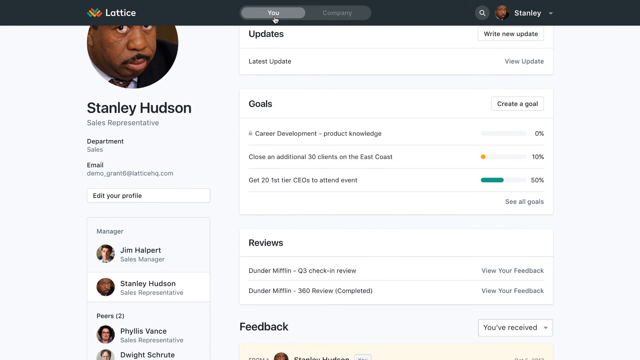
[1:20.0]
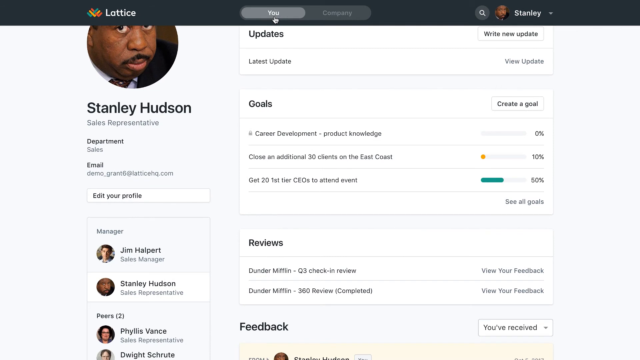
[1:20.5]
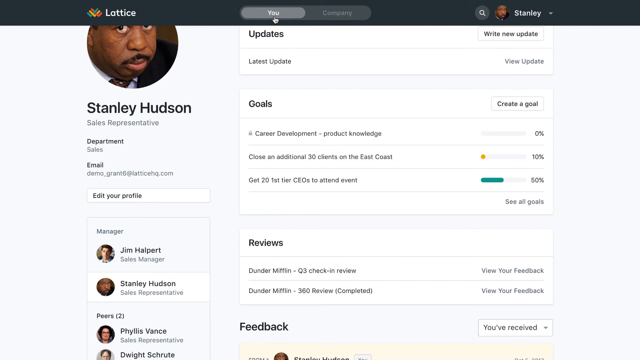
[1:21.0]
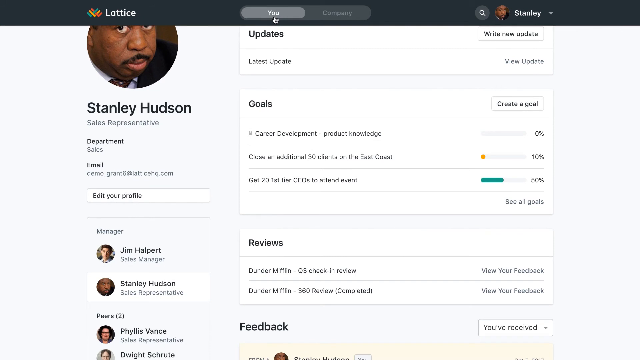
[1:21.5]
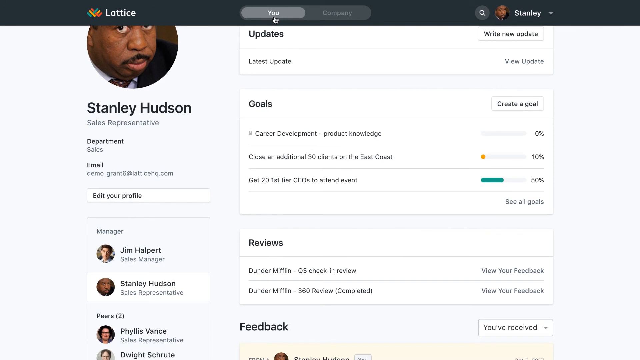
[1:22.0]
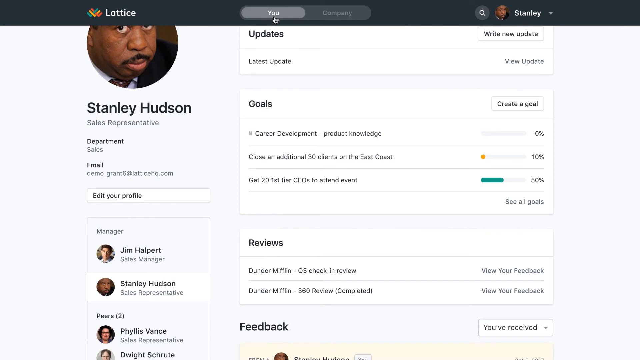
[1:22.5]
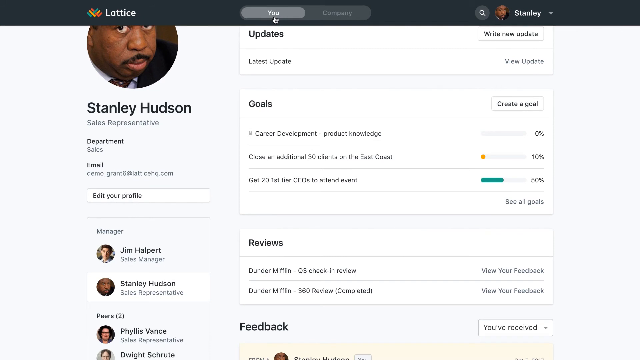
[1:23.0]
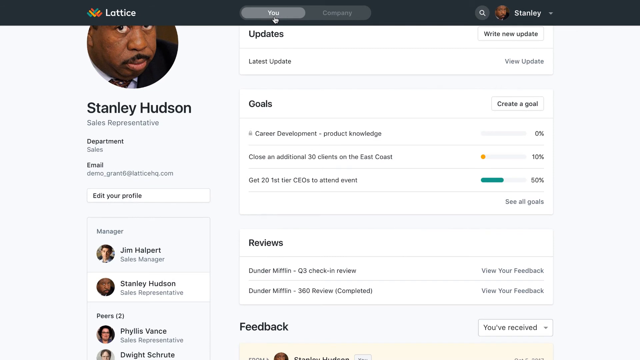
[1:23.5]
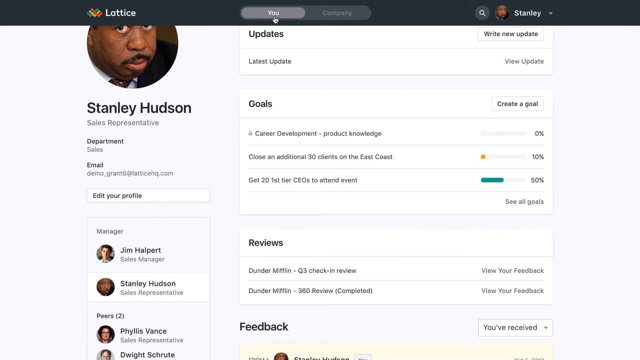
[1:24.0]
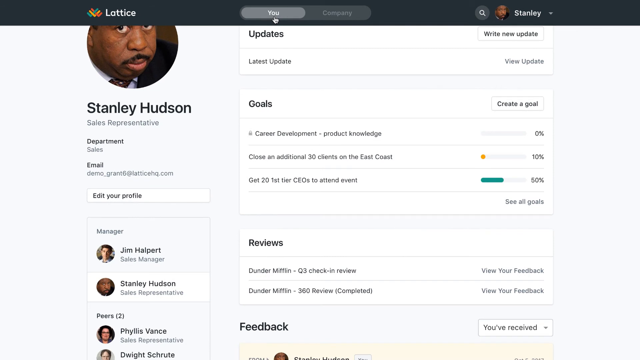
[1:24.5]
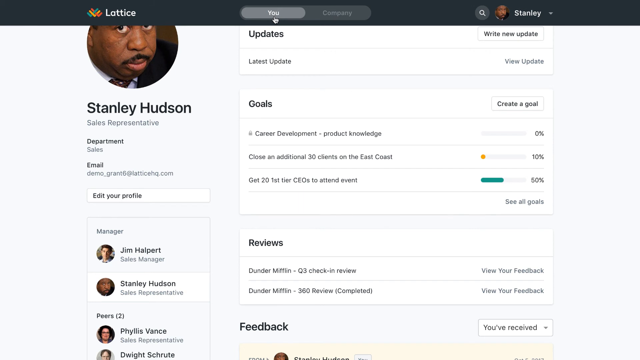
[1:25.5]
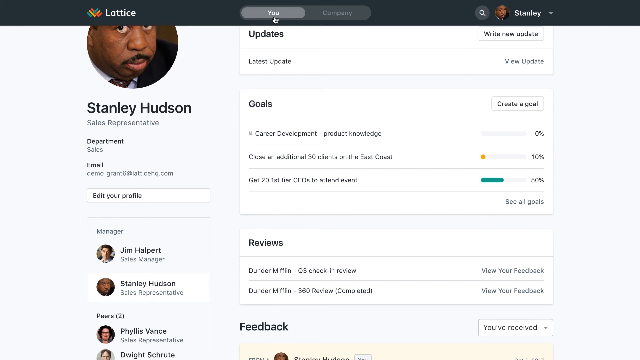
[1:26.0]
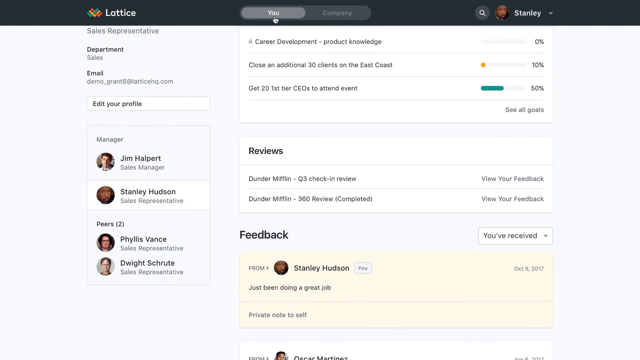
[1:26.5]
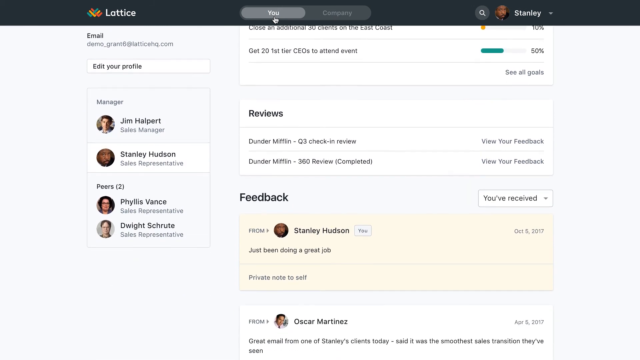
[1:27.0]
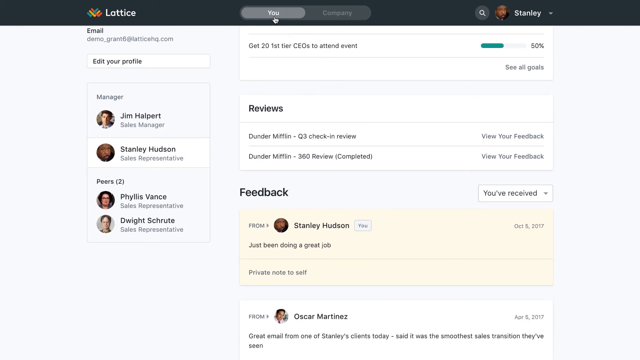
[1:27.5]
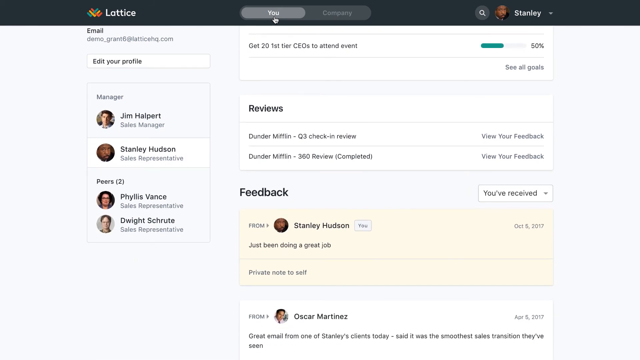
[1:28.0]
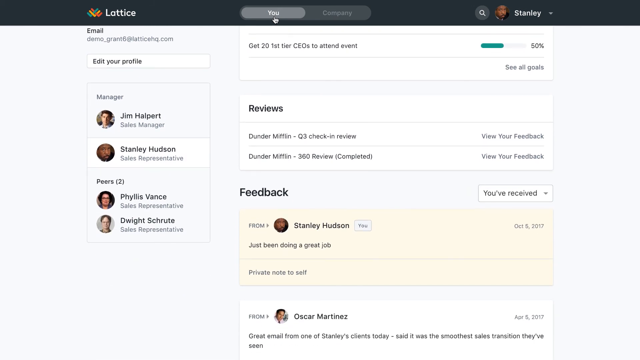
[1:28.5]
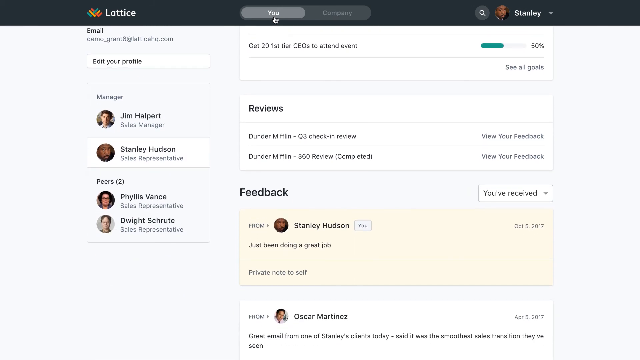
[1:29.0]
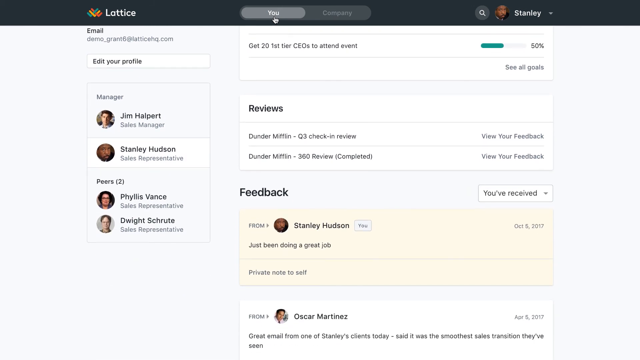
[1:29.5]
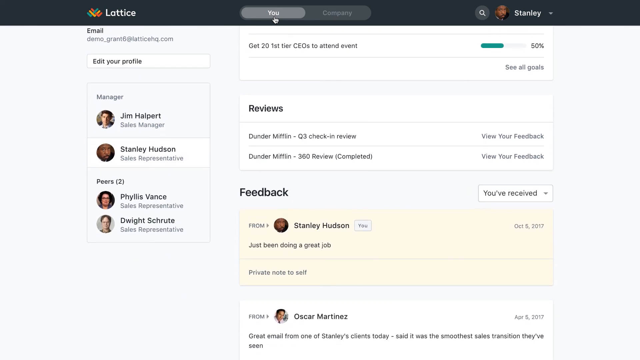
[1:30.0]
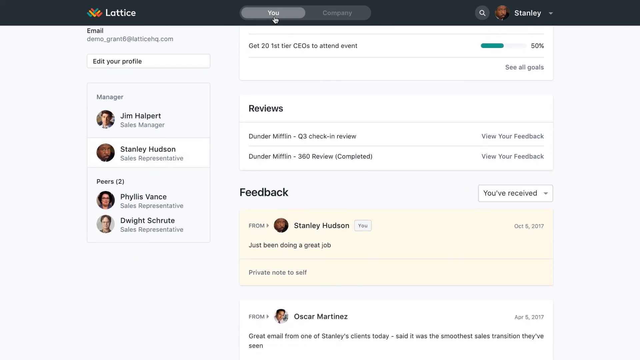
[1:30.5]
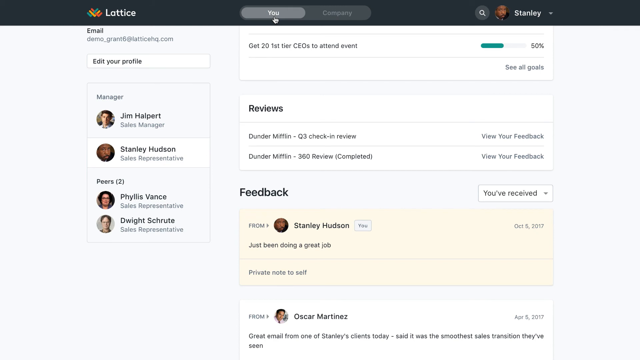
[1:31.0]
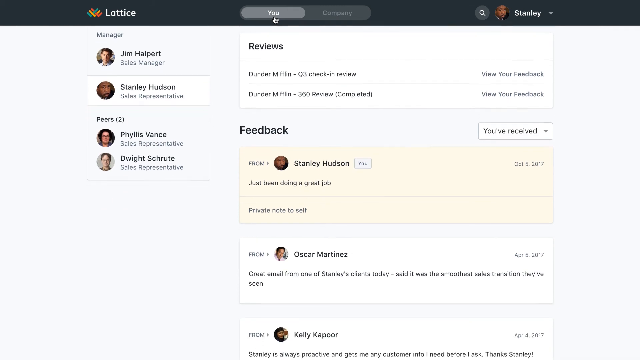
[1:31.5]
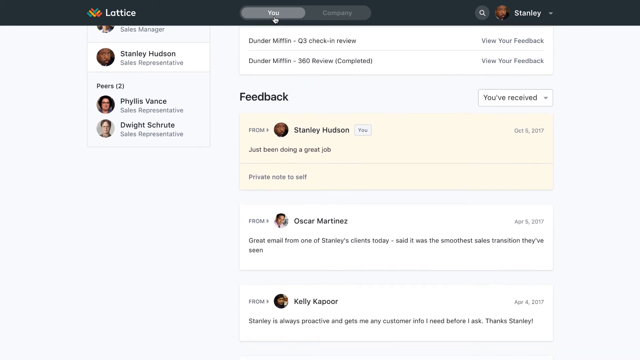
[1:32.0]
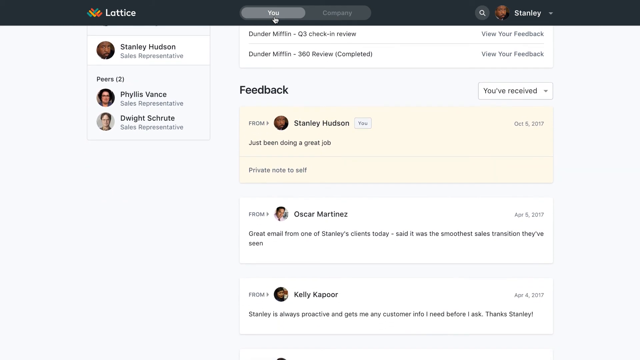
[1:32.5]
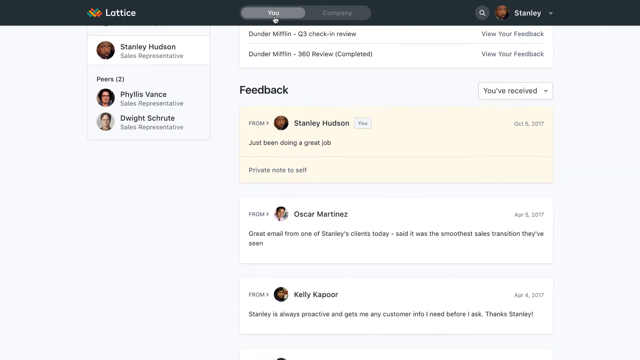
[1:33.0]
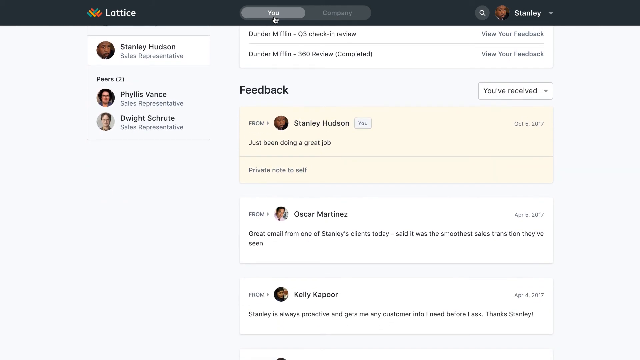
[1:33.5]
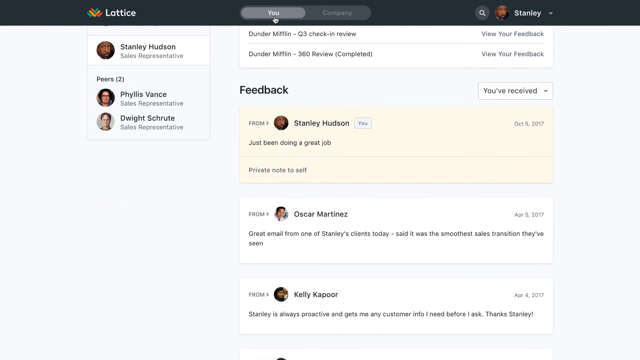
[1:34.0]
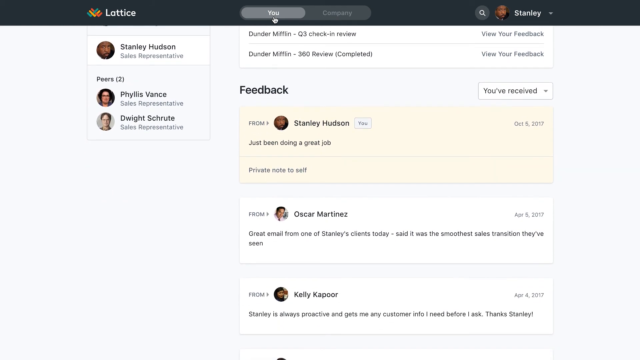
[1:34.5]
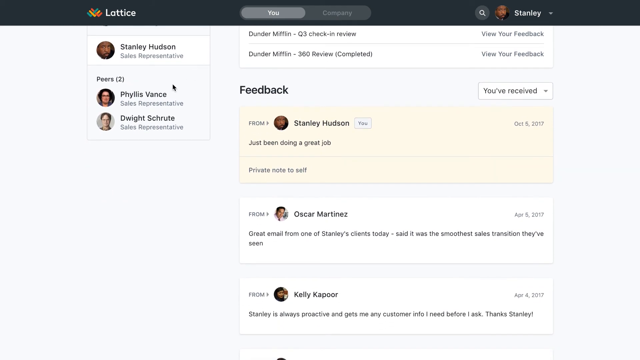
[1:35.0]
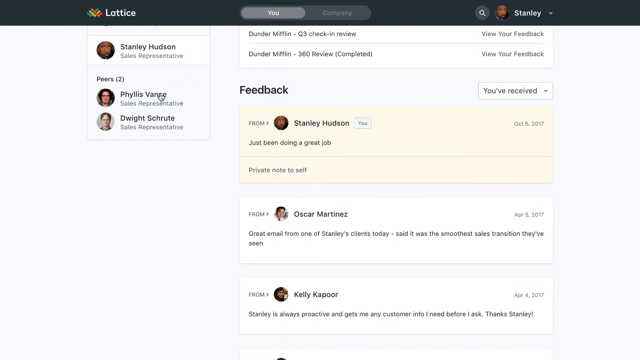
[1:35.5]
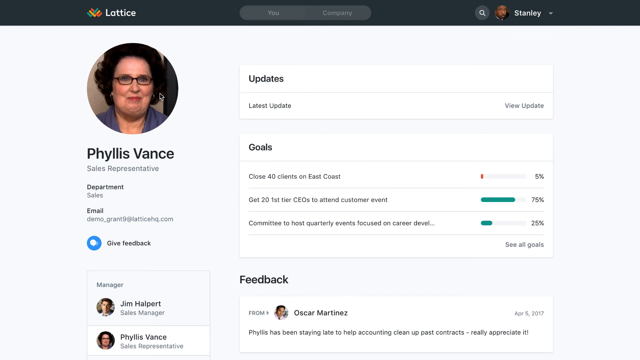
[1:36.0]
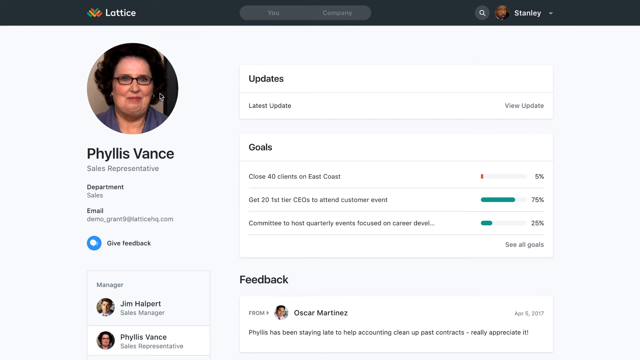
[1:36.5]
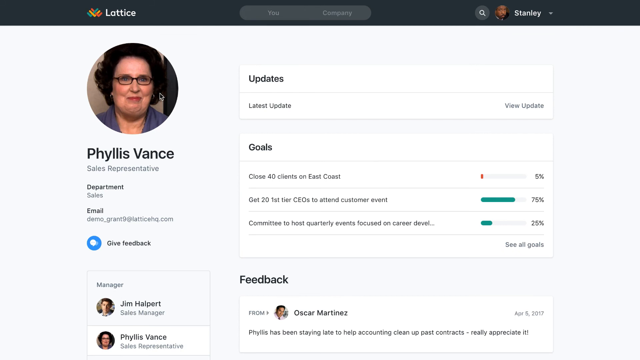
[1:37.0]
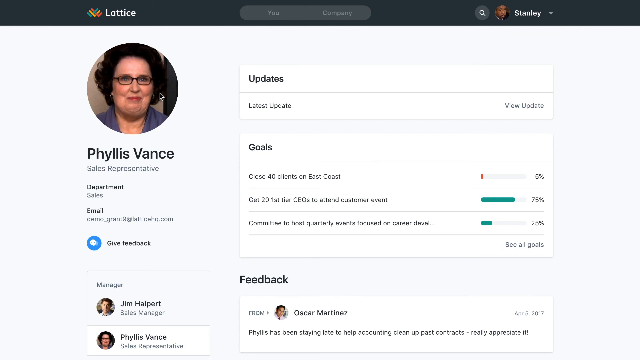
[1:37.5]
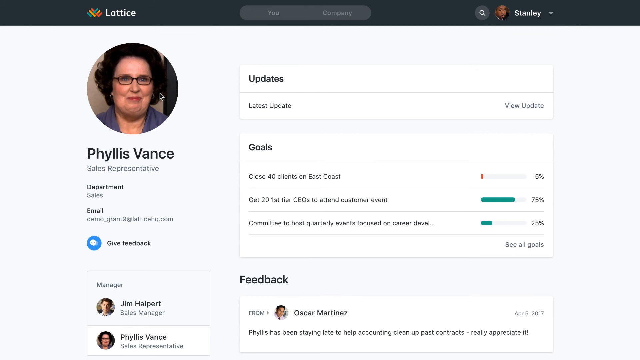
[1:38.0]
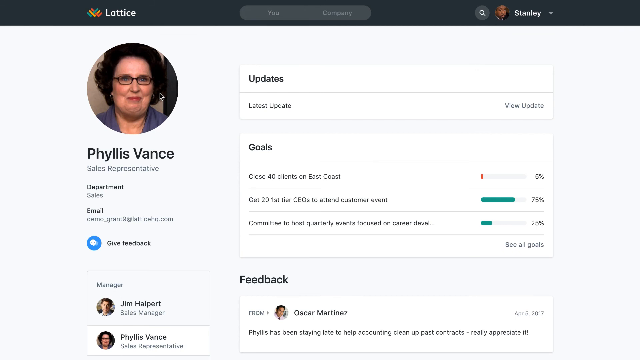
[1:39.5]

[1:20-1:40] The screen has scrolled down, showing several sections in the main right column. The top section, "Updates," offers an option to write a new update and a "Latest Update" item to view the latest update. Below it is "Goals," with a button to create a goal and three goals already listed; one is "Career Development, Product Knowledge," at 0% complete. The page scrolls down again to "Reviews," which contains two reviews, and below that a "Feedback" section listing various messages, with the "You've Received" option selected. Apparently Oscar Martinez gave Stanley good feedback, reading "great email from one of Stanley's clients today. Said it was the smoothest sales transition they've seen," dated April 5, 2017. The user then clicks on Phyllis Vance on the left, bringing up another profile.